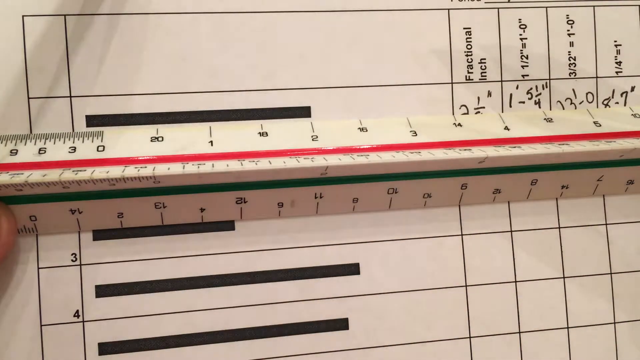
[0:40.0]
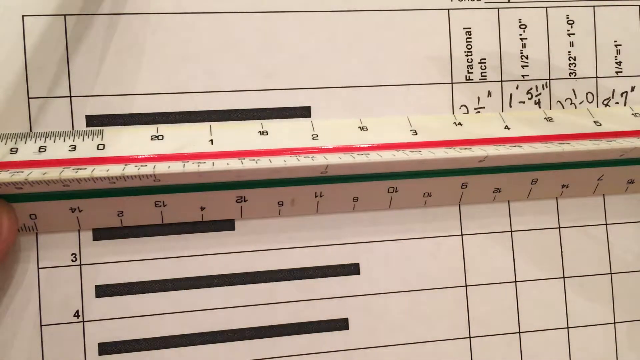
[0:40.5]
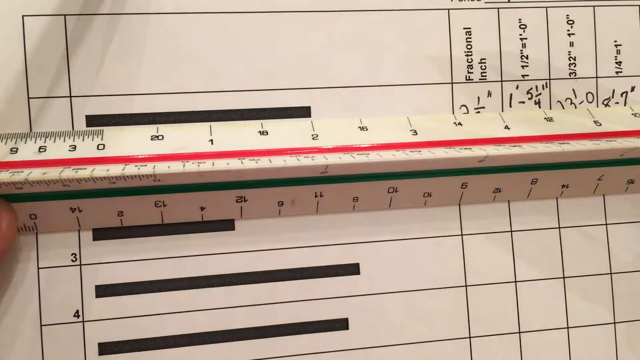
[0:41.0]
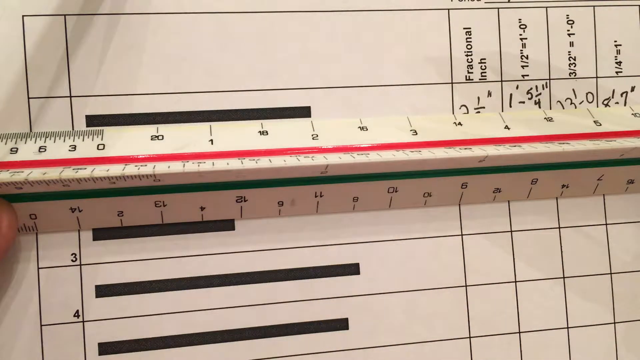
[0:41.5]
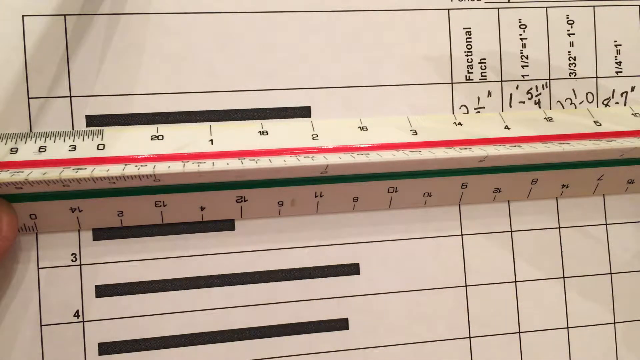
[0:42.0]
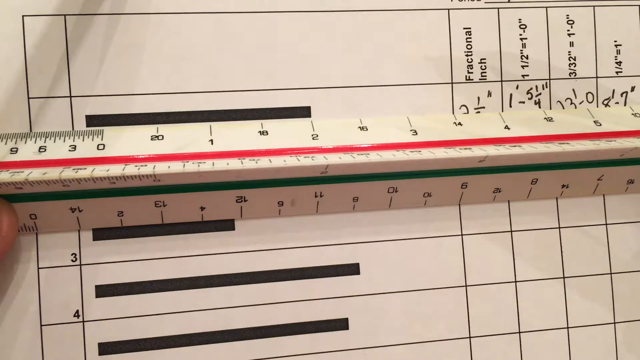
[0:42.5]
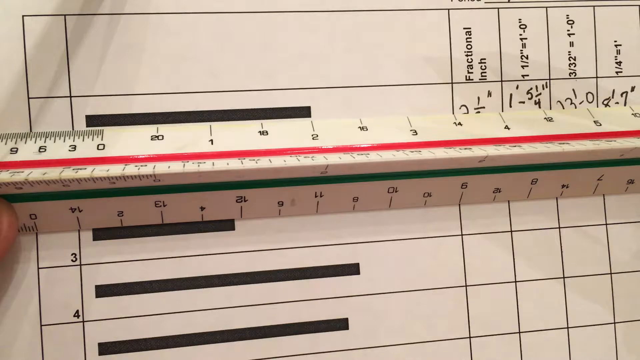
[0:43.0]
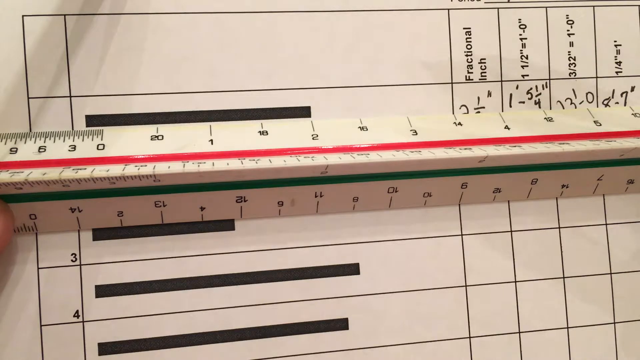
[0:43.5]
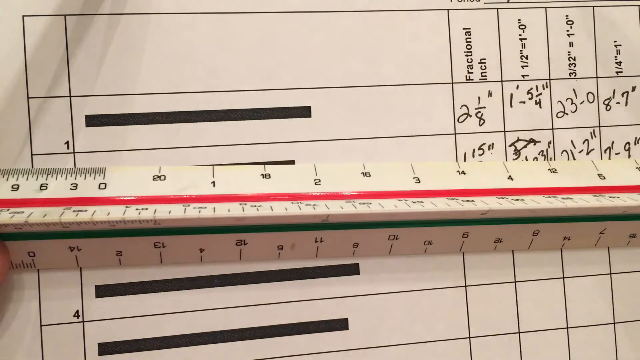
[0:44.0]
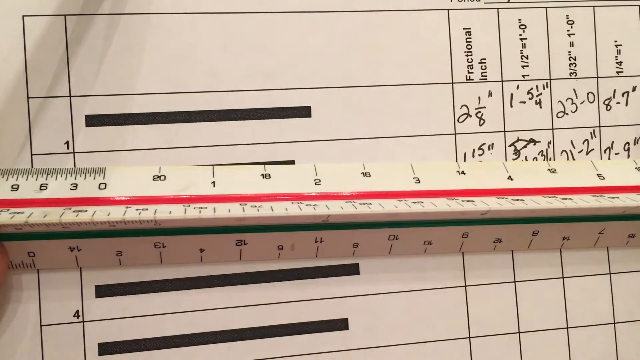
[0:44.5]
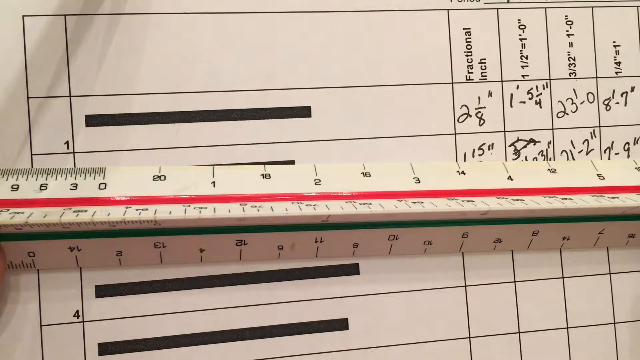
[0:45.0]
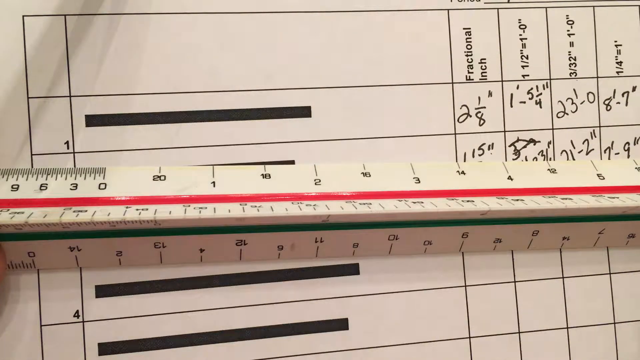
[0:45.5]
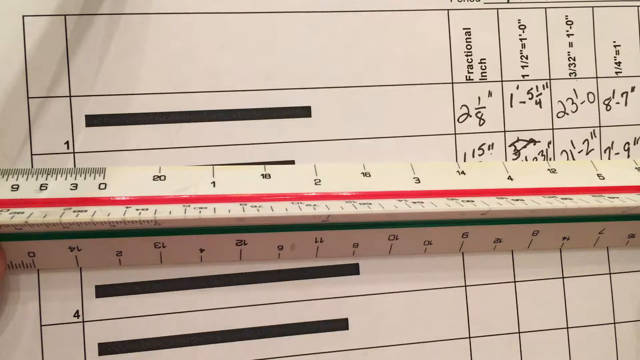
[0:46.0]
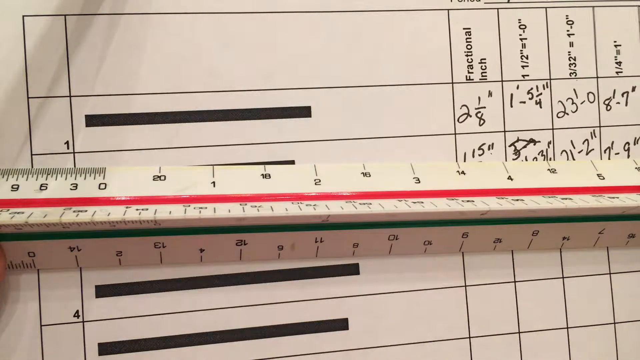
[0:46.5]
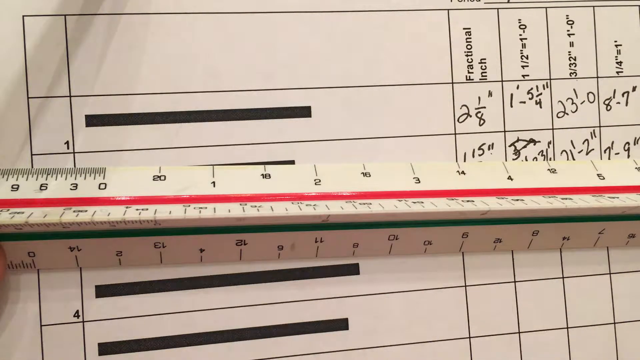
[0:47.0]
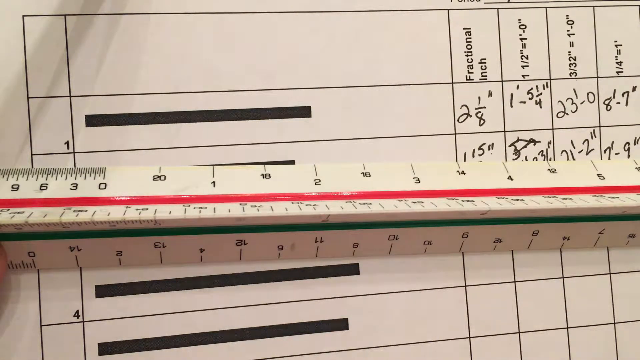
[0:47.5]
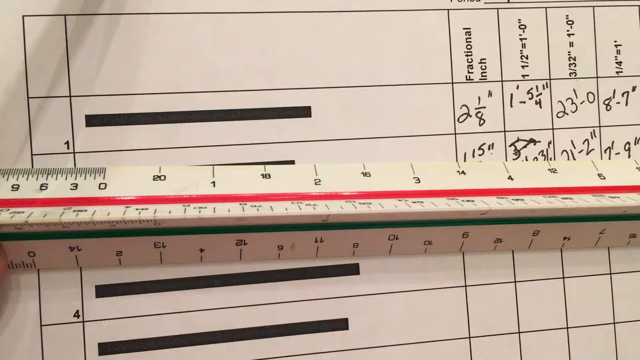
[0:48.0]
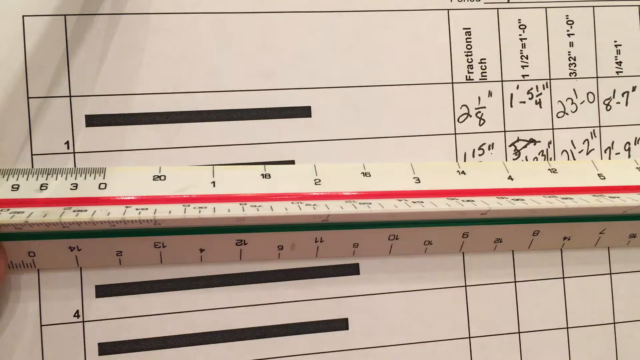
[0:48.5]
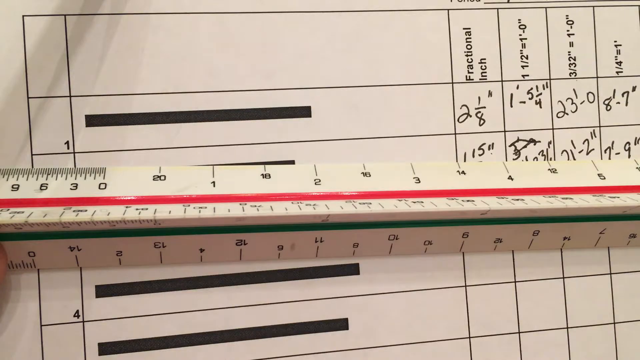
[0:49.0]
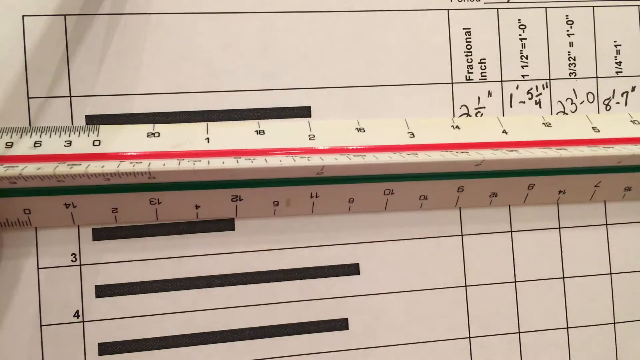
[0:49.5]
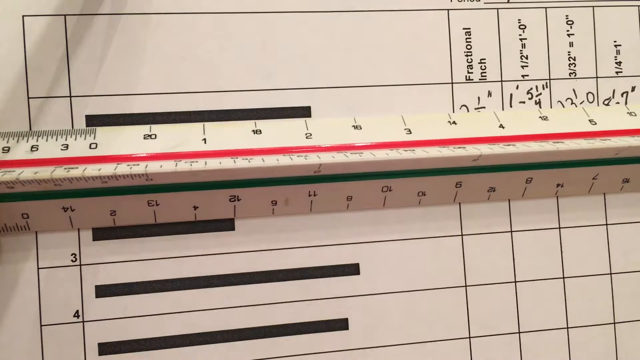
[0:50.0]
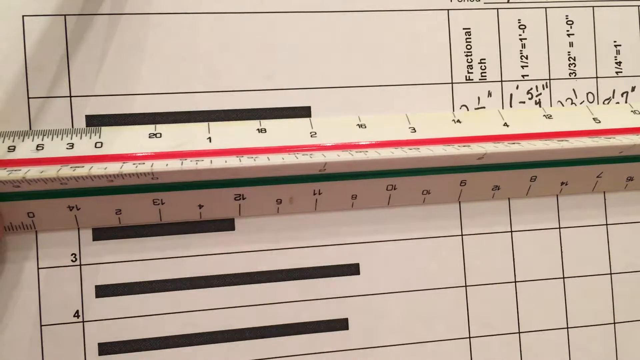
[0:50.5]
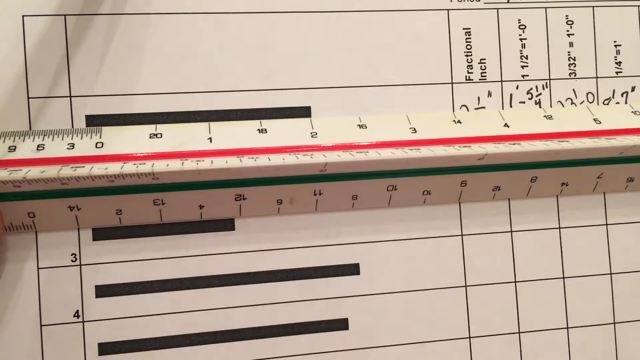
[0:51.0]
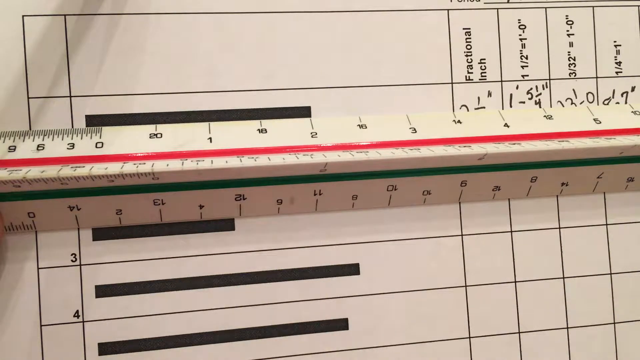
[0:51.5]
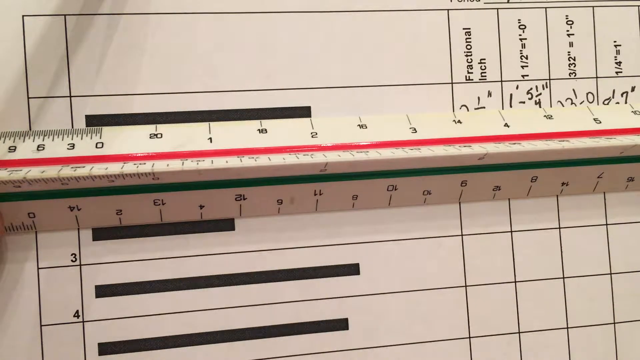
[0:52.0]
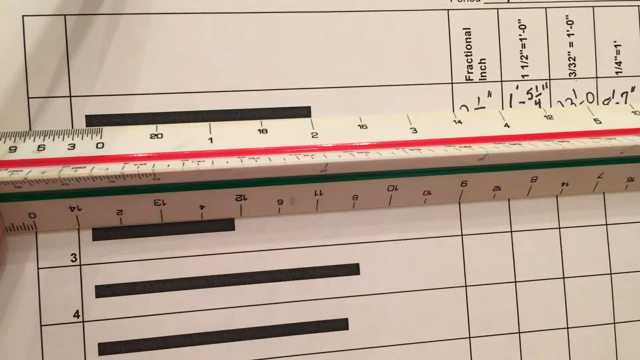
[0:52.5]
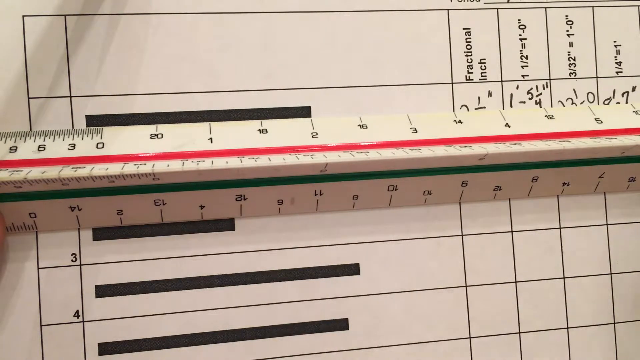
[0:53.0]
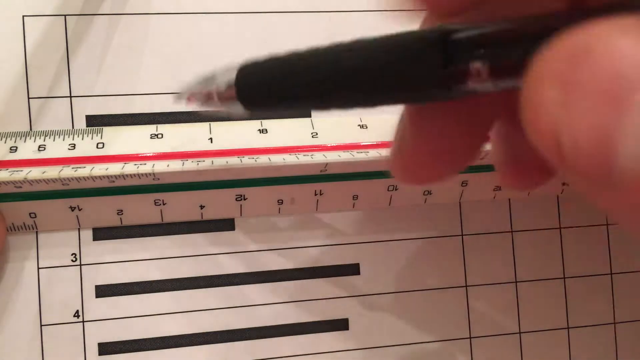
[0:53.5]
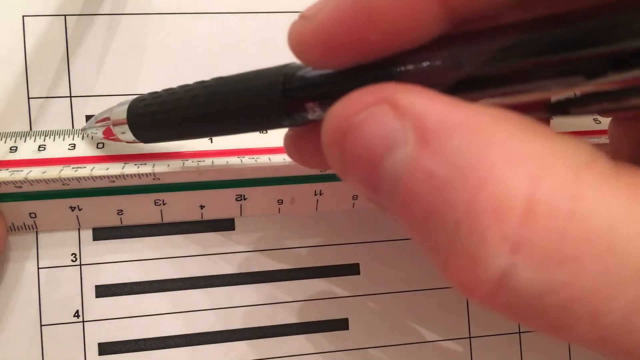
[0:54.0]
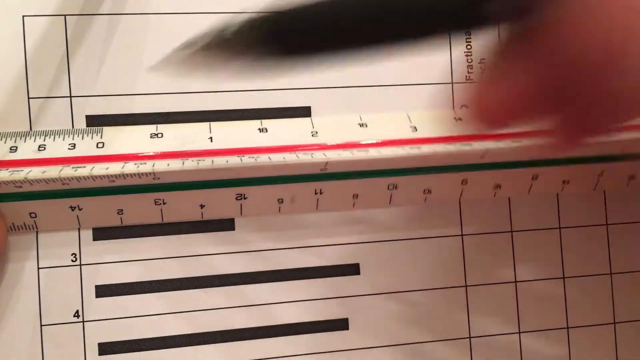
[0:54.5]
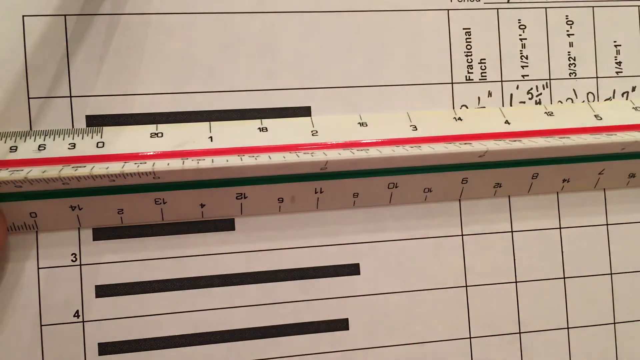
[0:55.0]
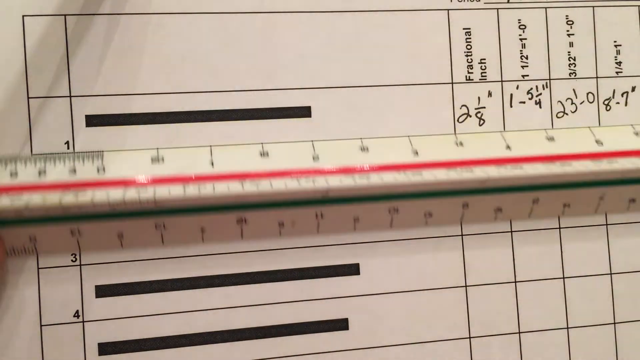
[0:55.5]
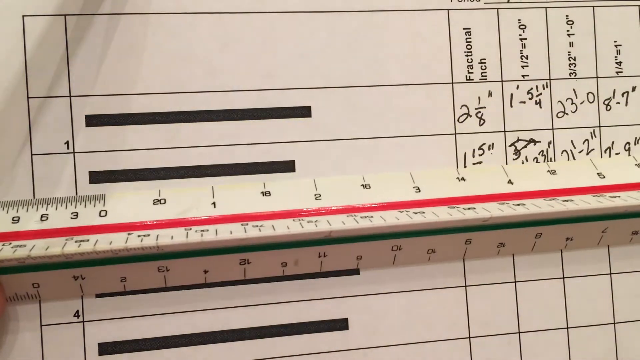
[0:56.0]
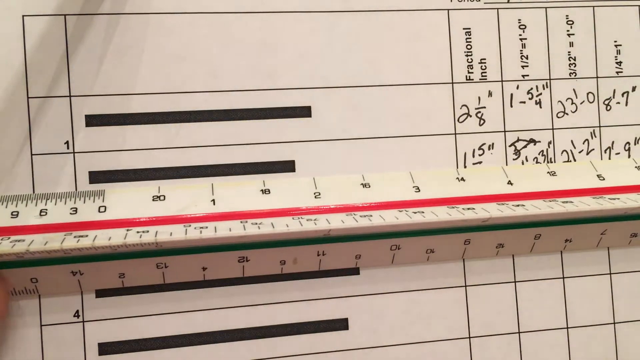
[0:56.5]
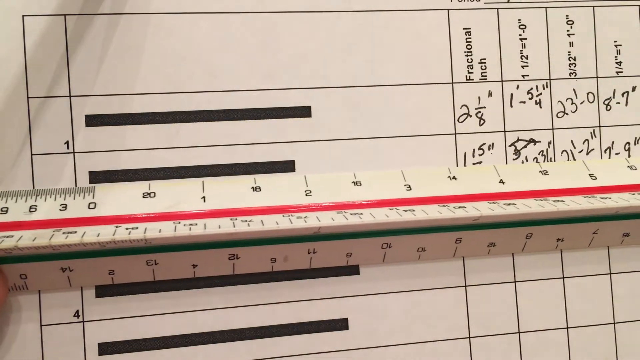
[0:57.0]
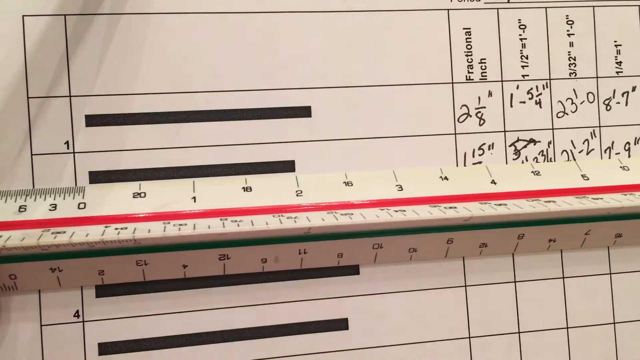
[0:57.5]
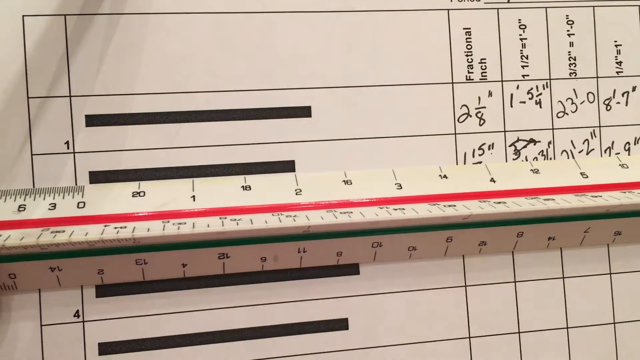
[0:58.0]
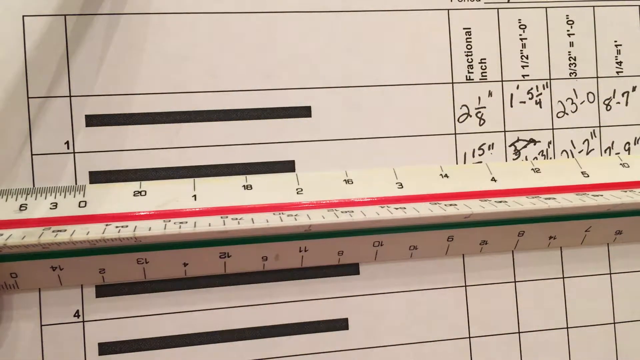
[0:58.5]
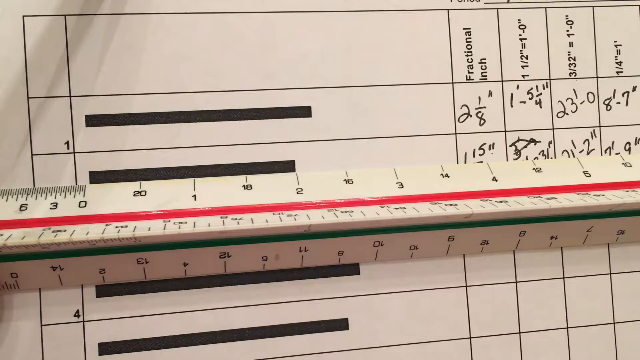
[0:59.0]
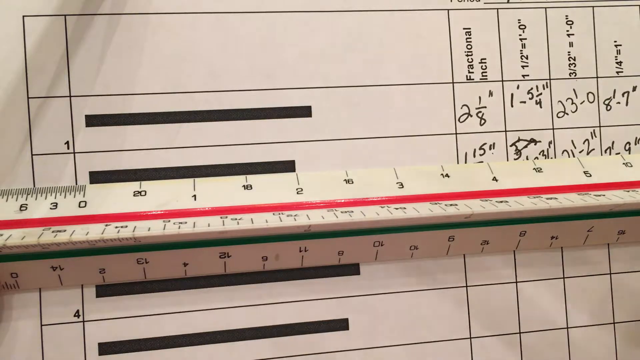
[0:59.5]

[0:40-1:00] The man continues pointing out various units of measurement. He moves the ruler down for a moment and brings it back up, then points at what seems to be the three mark on the quarter section at the beginning of the ruler and moves it down a bit. He is working on a sheet of paper with measured black lines on it, apparently working out the exact measurement of each black line. On the right side of the paper there is writing in several columns; the first column says "fractional inch", and the entry for the first line is two and one eighth.